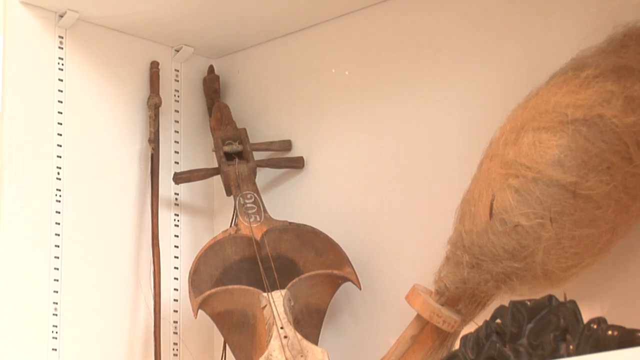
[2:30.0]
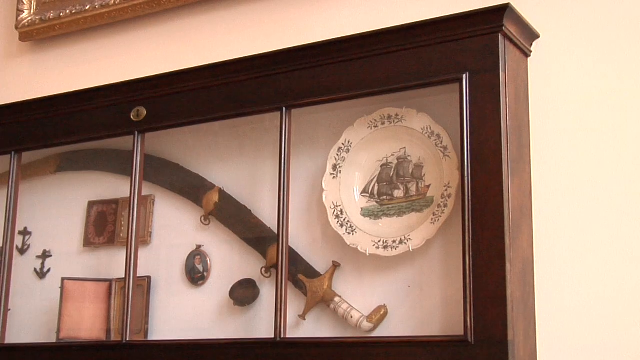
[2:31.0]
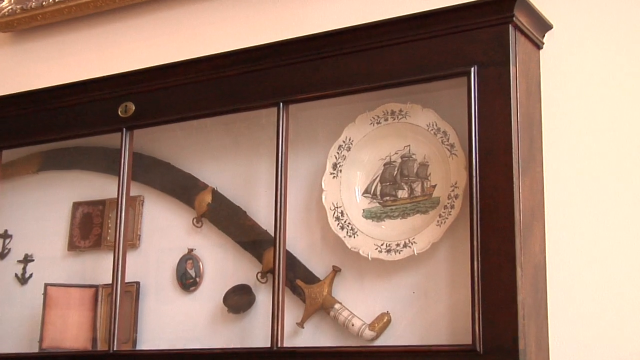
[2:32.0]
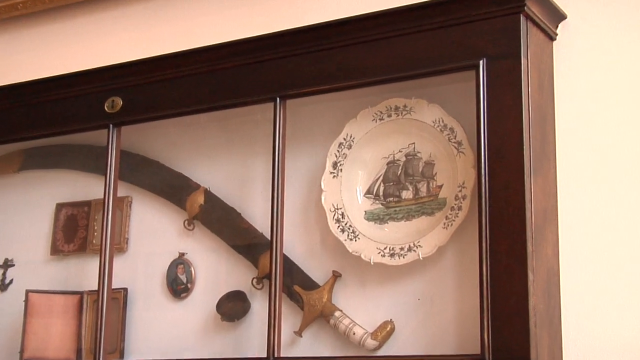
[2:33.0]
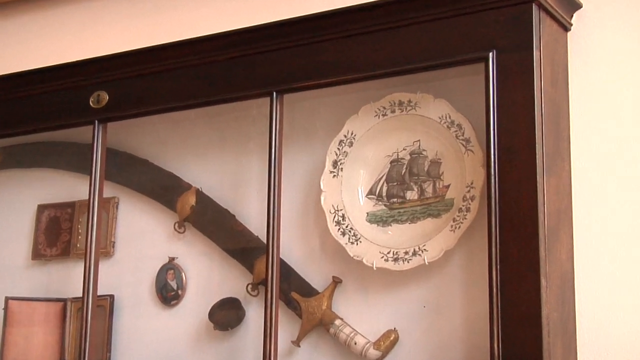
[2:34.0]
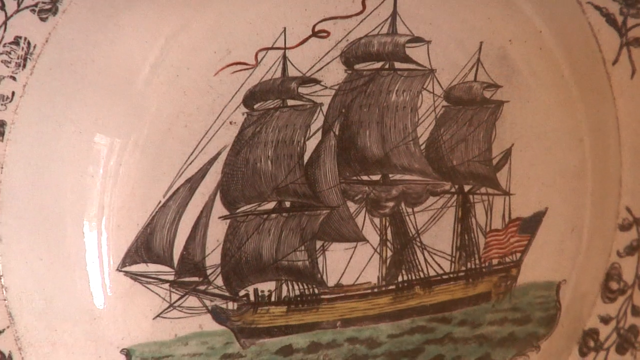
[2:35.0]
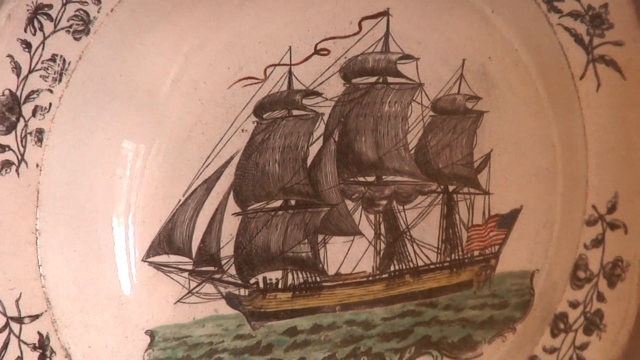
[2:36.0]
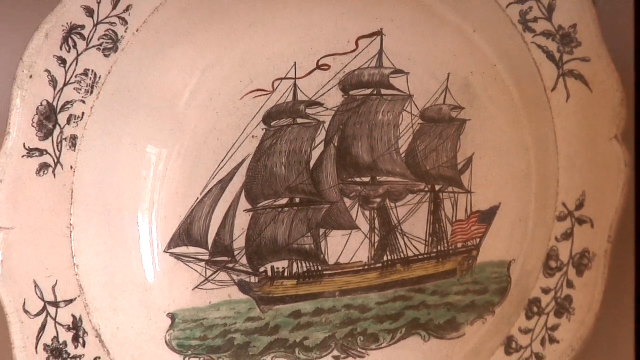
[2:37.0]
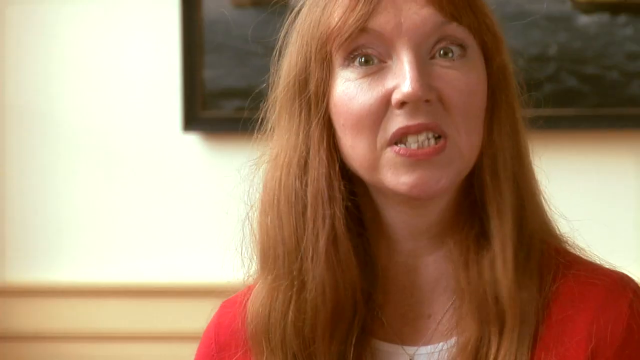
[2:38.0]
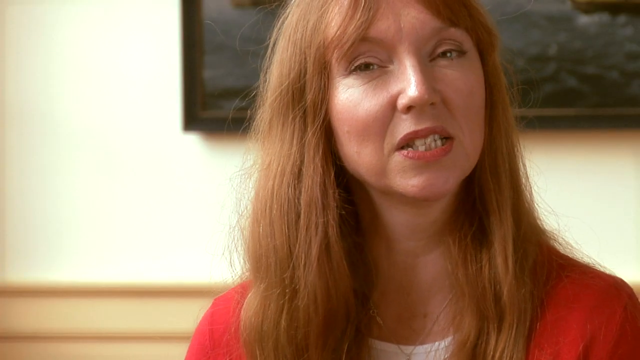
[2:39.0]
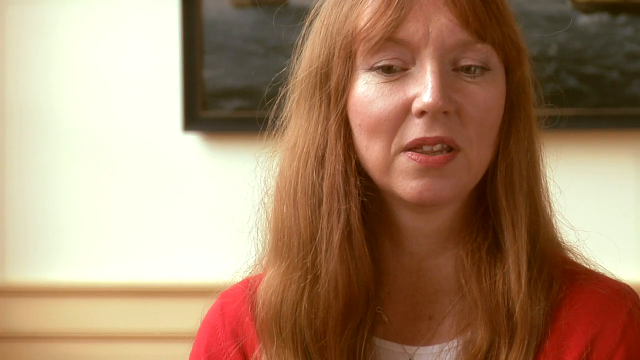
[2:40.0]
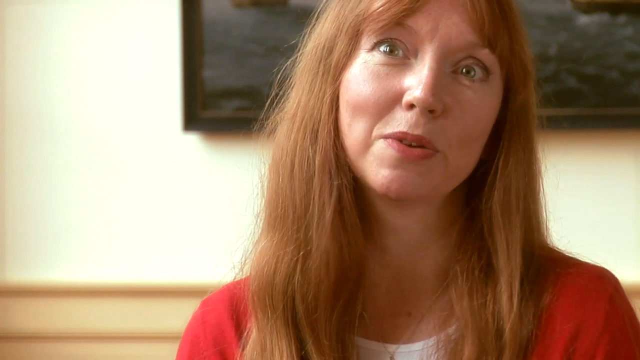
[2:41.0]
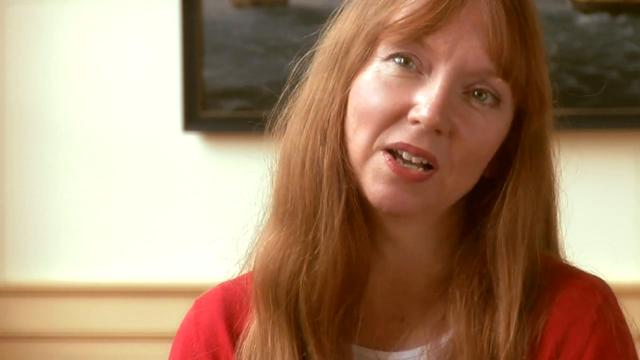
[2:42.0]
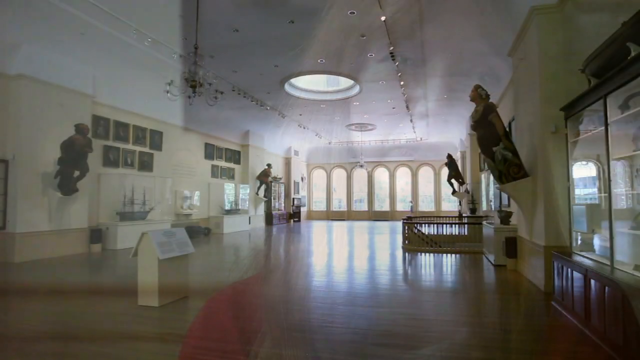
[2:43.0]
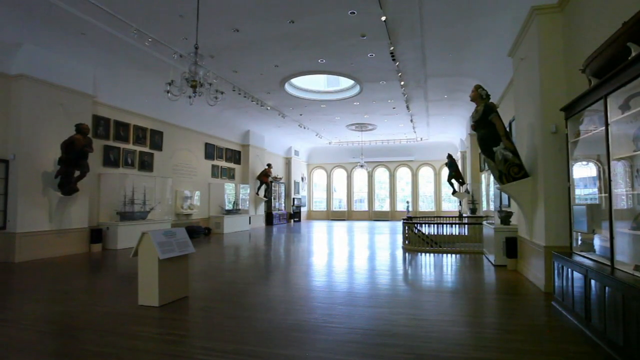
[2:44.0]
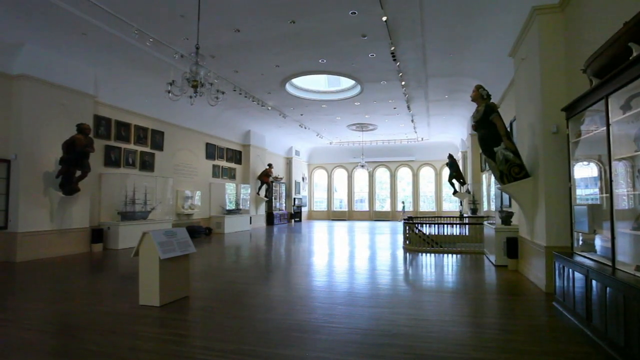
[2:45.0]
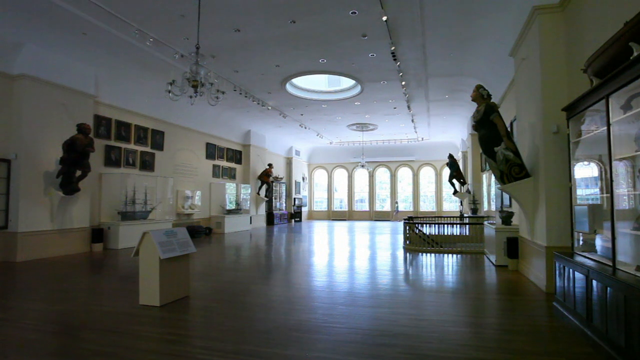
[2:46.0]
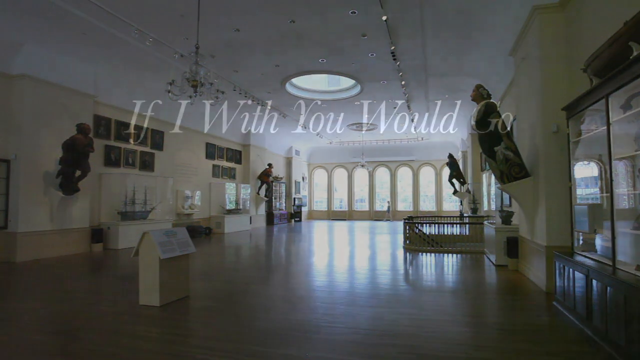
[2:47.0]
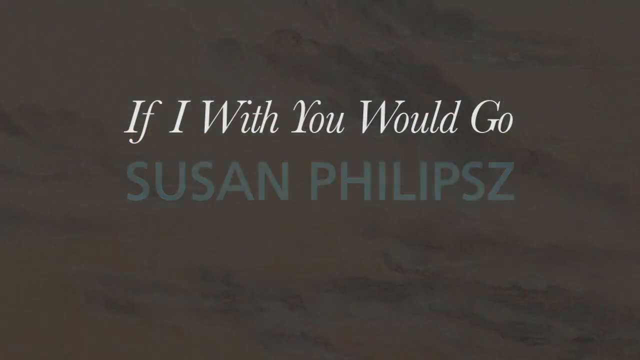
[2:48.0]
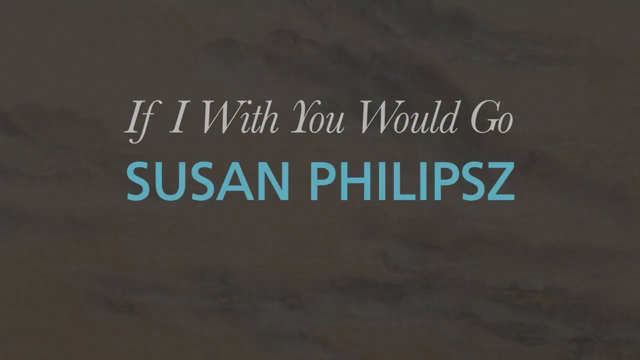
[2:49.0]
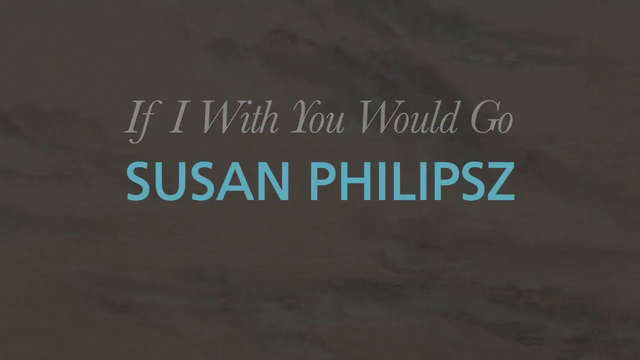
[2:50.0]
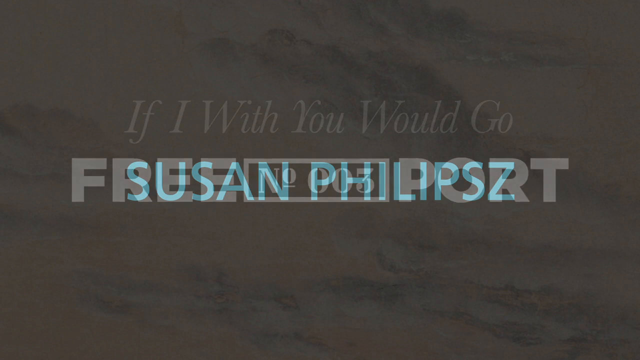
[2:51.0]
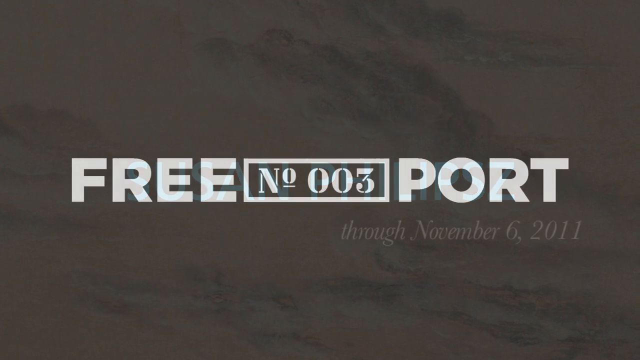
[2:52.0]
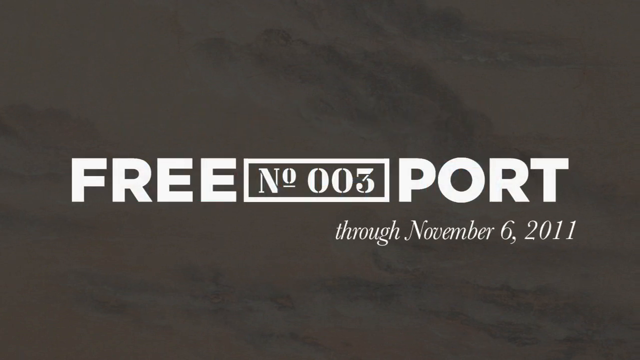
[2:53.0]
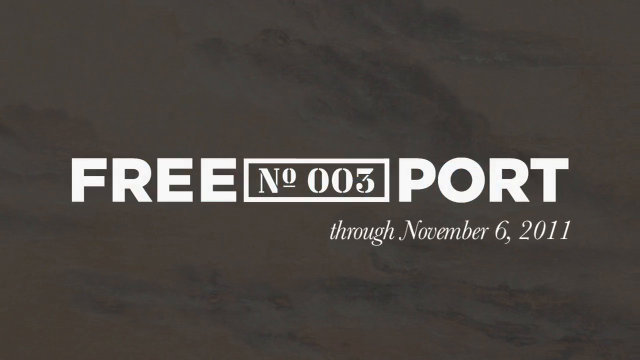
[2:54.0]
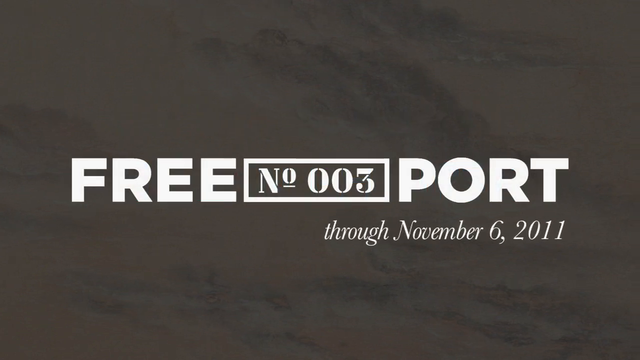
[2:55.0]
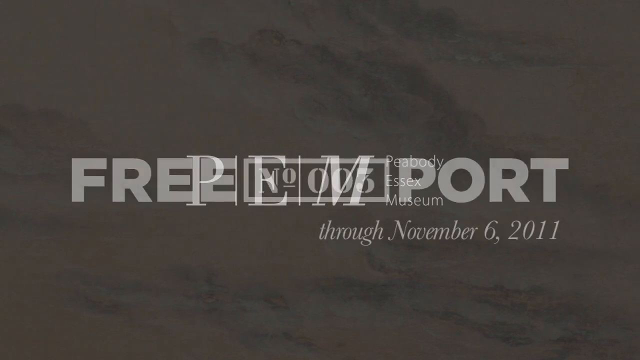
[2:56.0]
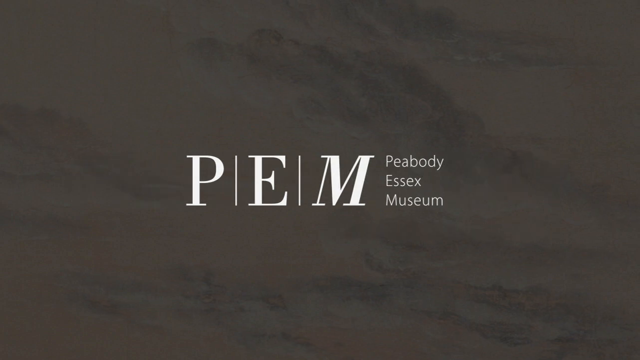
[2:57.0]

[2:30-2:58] The musical instrument is up on the wall; it looks like an oversized violin or a small cello but clearly is not either. White walls are in the background, and the camera pans up. The video cuts to what looks like china in a cabinet, along with what appears to be a sword and other items, as the camera zooms in; it then zooms in on a piece of the china that has a picture of a ship with sails. The video cuts back to the red-haired woman on the right-hand side, still talking; a quick edit splices footage together, and she blinks her eyes quite a bit. The museum interior appears with nobody there. A grayish-black background shows white text at the top reading "if I with you would go," and in a bluish-gray font "Susan Phillips," with the name ending in an S and a Z. The name fades out, and then "Freeport through November 6 2011" appears, followed by "PME Peabody Essex Museum."